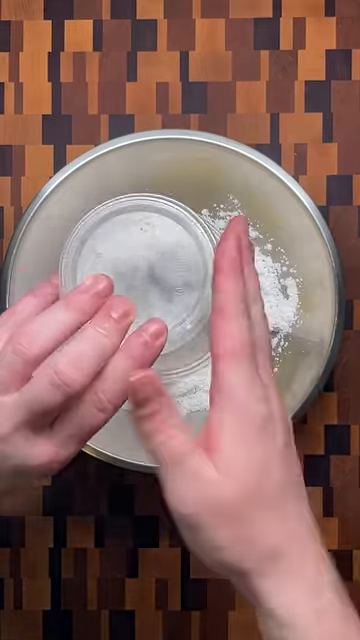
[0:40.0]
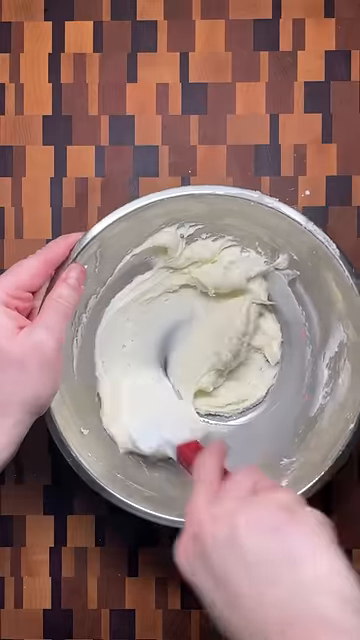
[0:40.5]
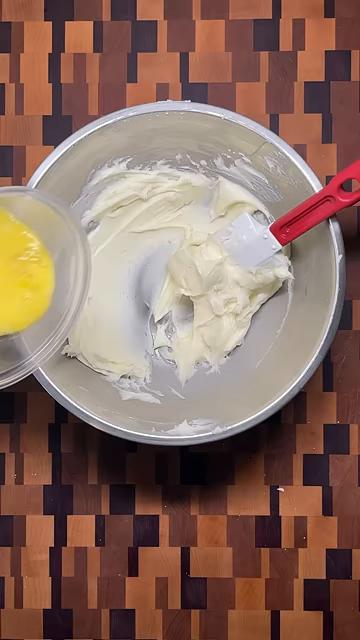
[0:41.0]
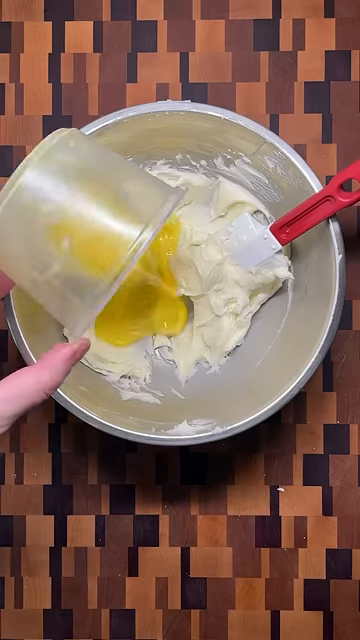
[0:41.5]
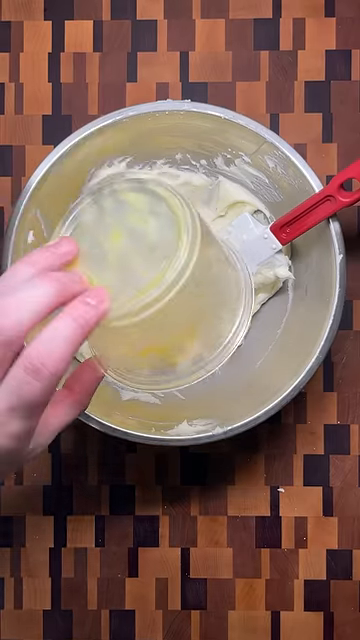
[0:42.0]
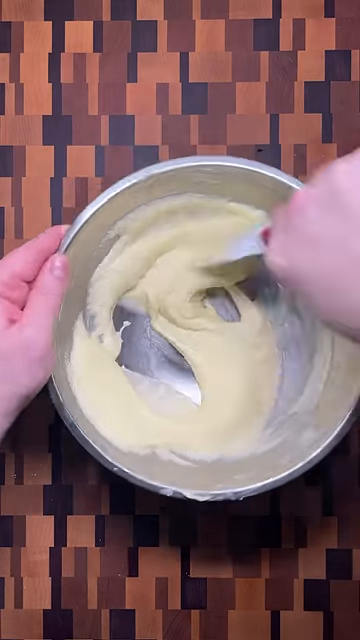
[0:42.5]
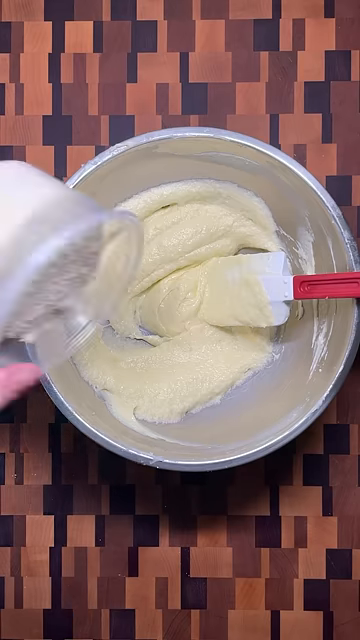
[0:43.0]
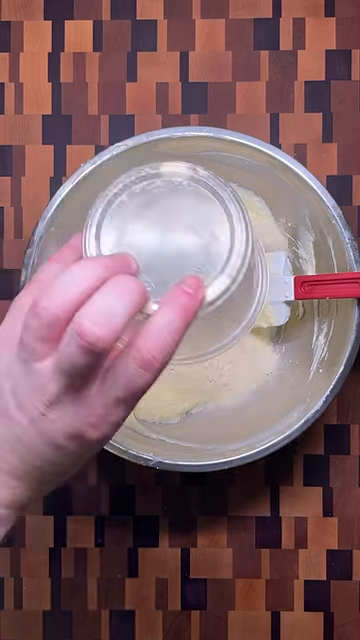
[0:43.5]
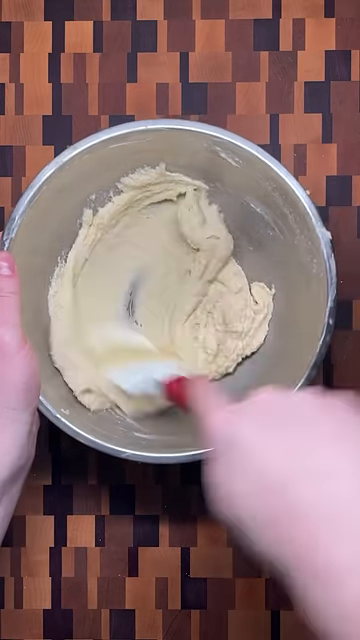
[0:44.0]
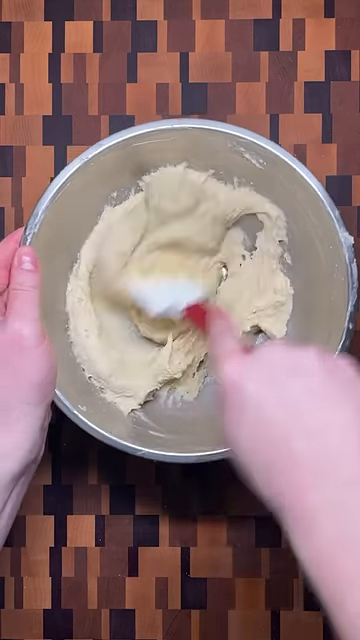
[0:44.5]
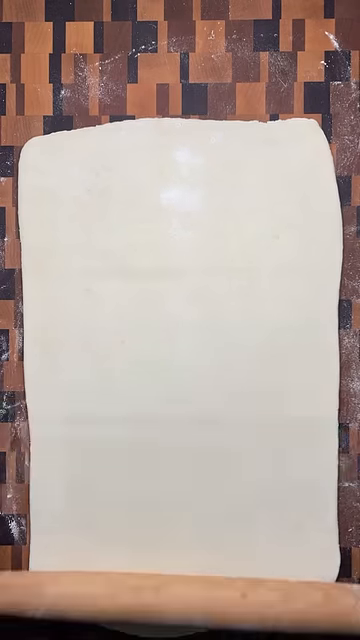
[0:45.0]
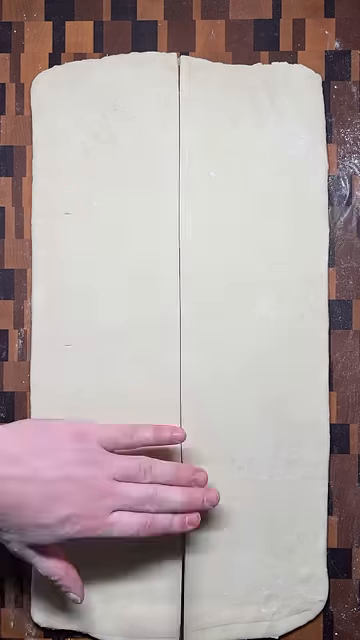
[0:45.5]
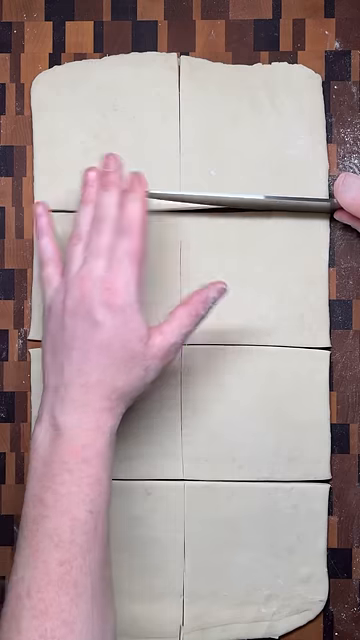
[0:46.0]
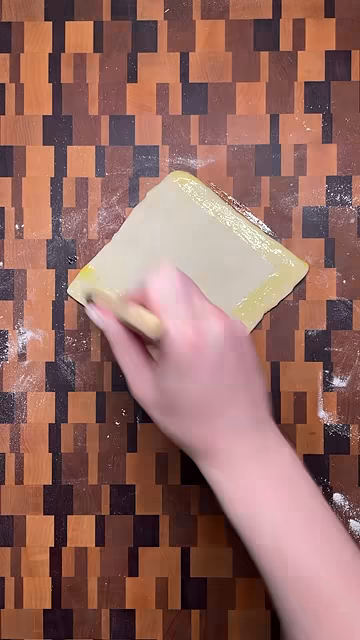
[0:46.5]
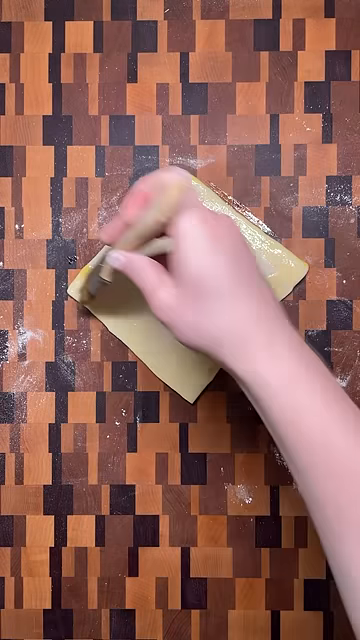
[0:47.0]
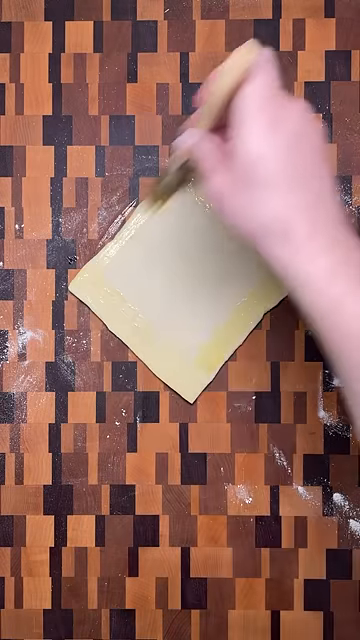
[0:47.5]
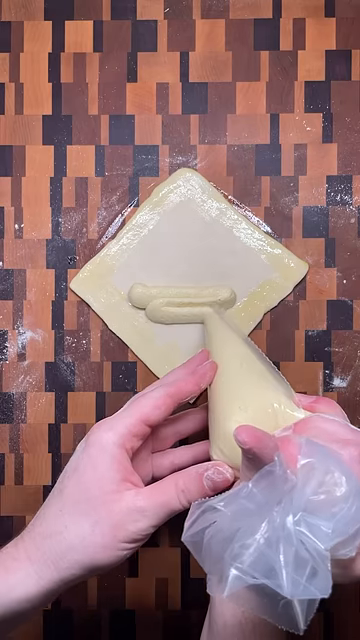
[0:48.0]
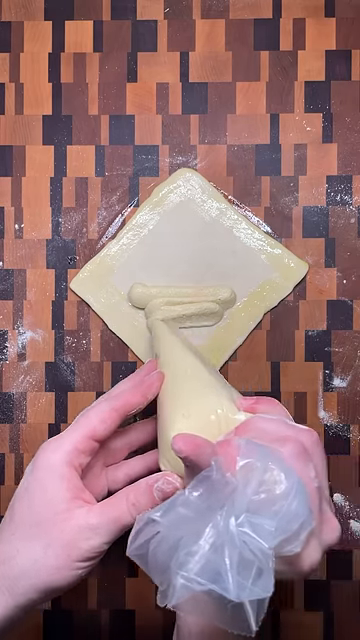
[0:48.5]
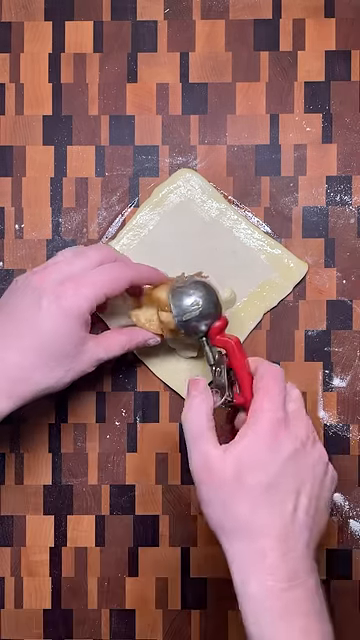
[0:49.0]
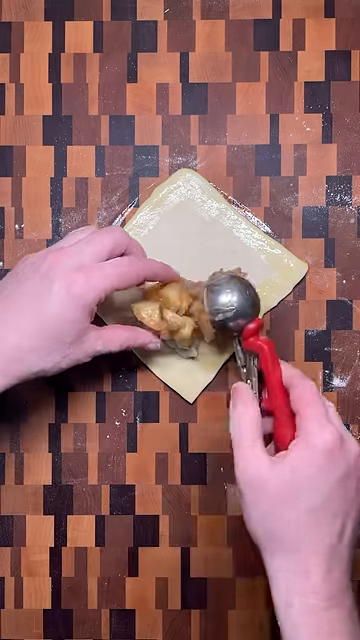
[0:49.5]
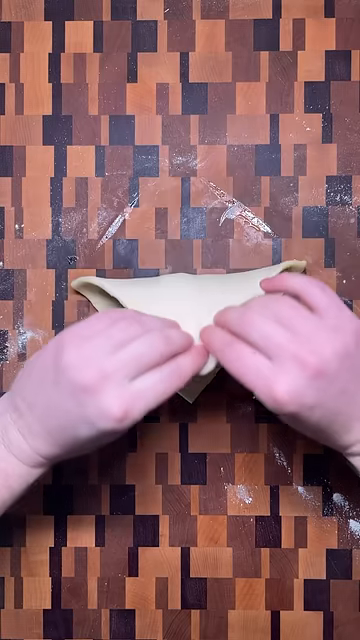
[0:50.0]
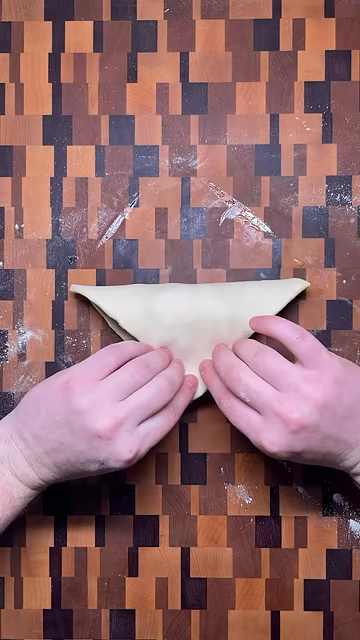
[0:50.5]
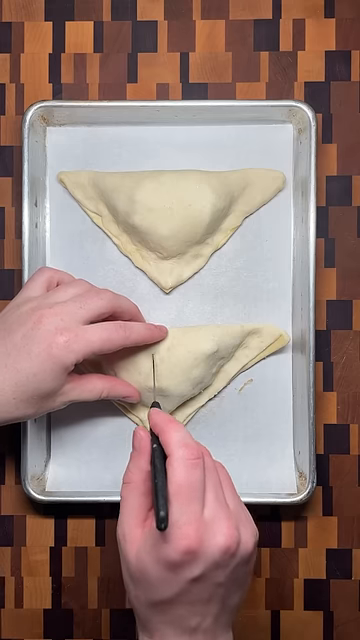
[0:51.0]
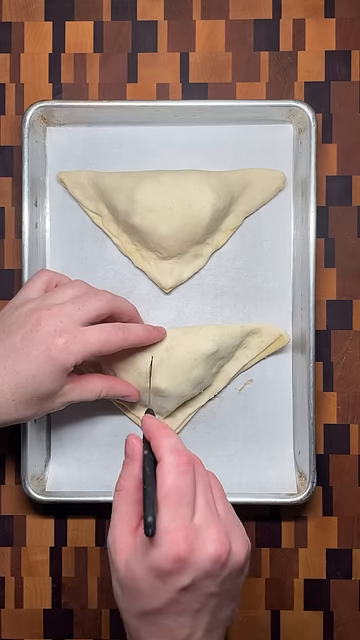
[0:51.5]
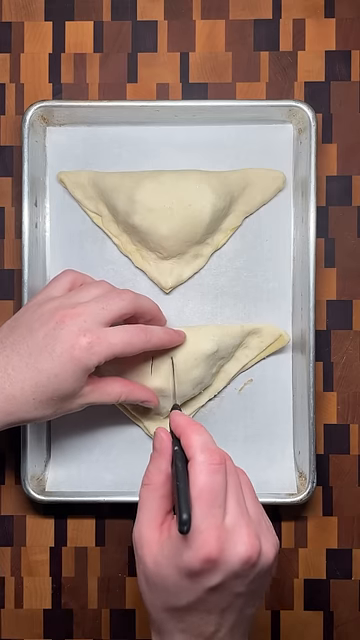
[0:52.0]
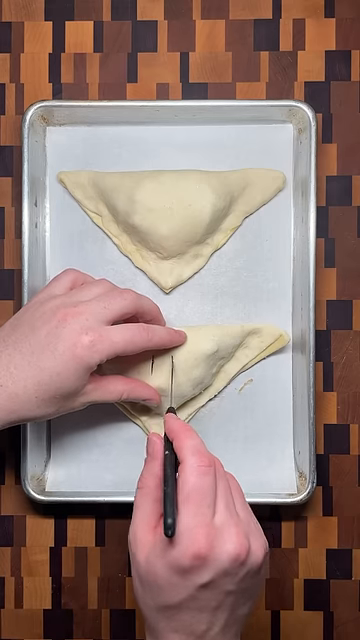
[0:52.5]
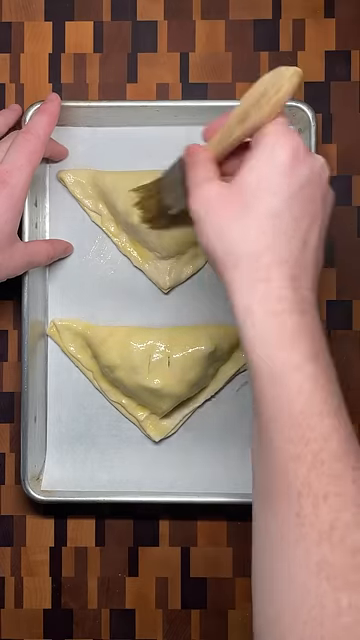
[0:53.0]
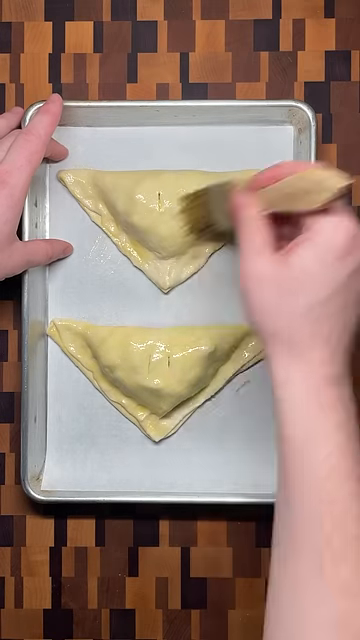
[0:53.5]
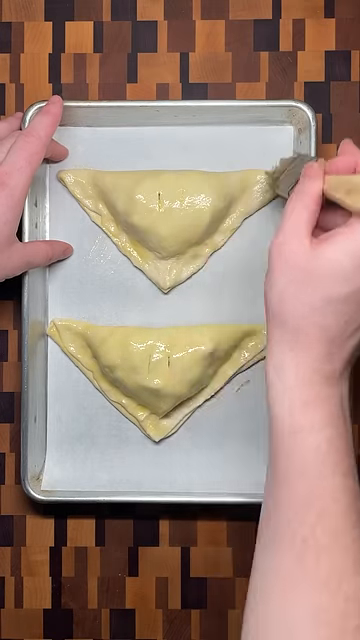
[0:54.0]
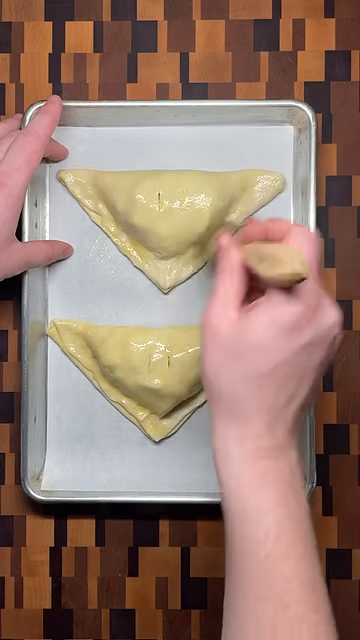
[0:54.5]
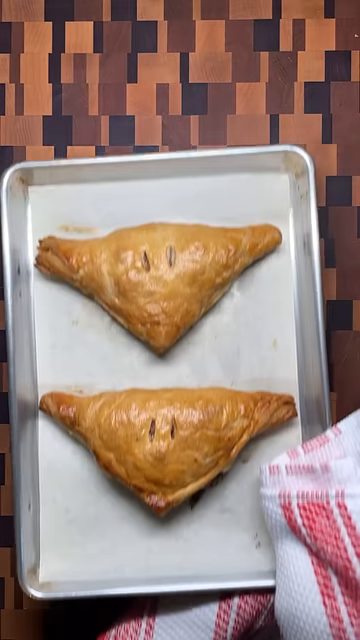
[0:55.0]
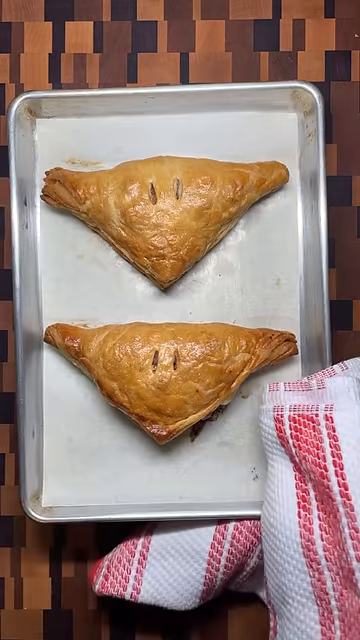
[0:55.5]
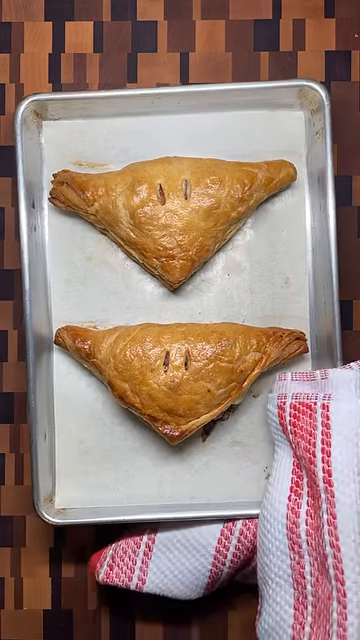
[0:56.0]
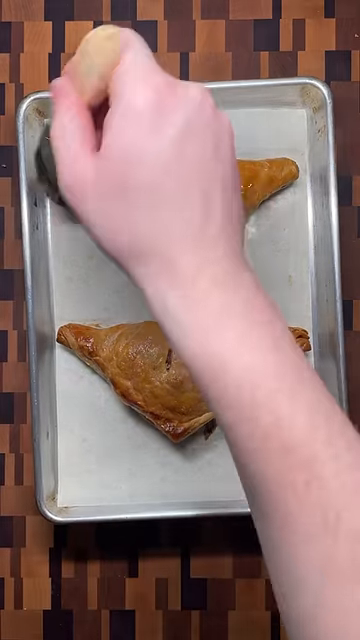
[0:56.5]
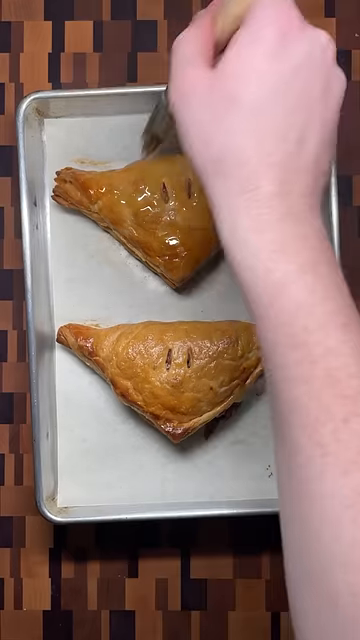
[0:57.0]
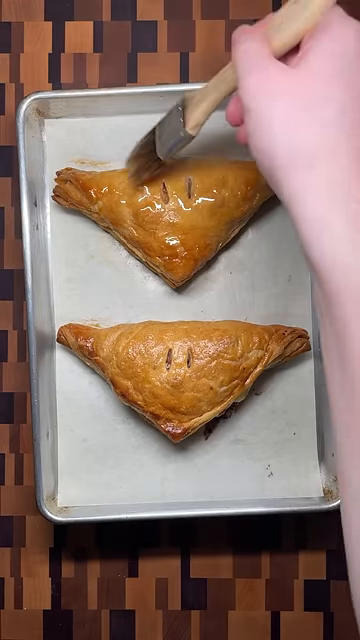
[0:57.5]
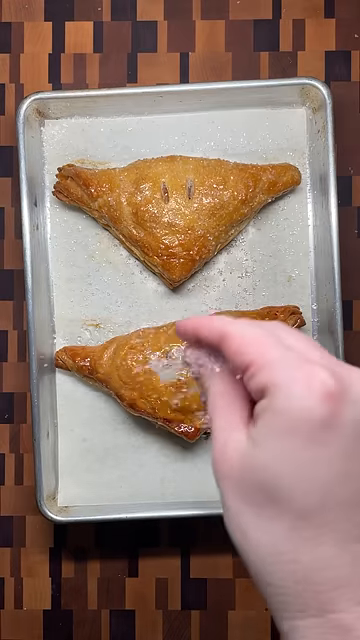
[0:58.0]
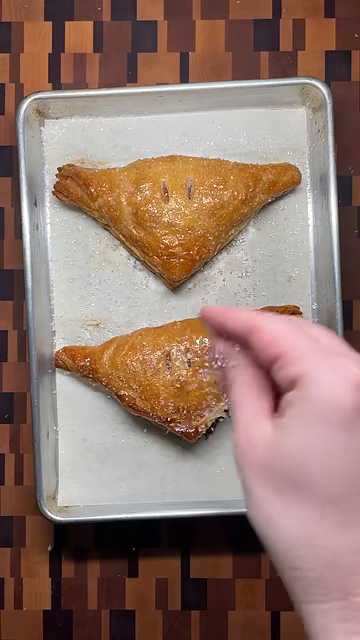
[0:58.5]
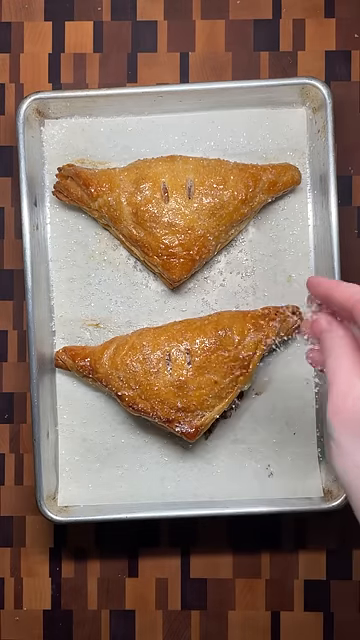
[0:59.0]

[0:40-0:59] The person puts some flour on a pot, then she cuts it into a square shape and puts some previously prepared fruits on it. She then breaks it, and it turns into something that completely breaks apart.